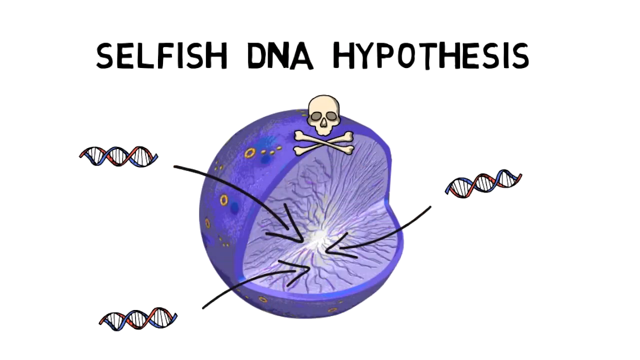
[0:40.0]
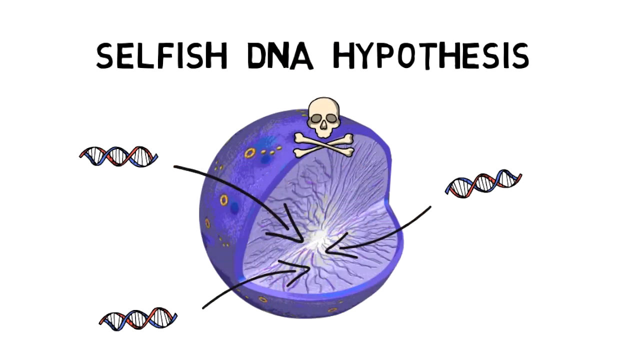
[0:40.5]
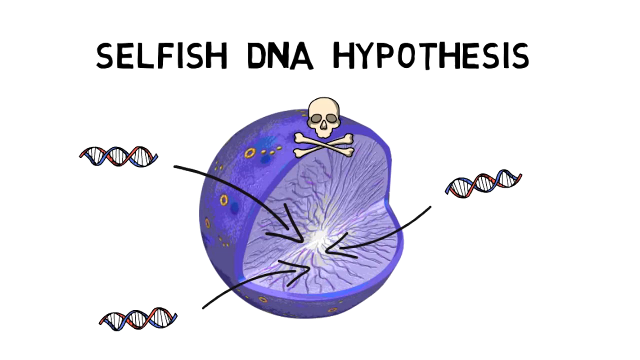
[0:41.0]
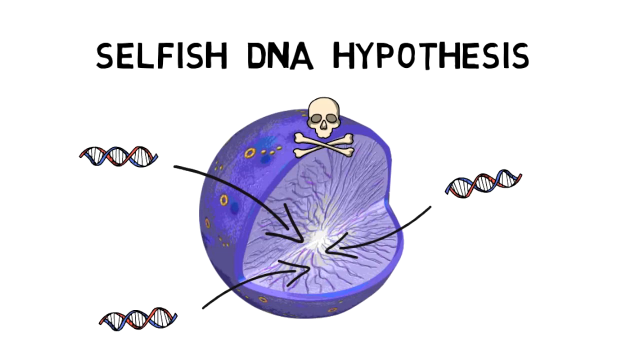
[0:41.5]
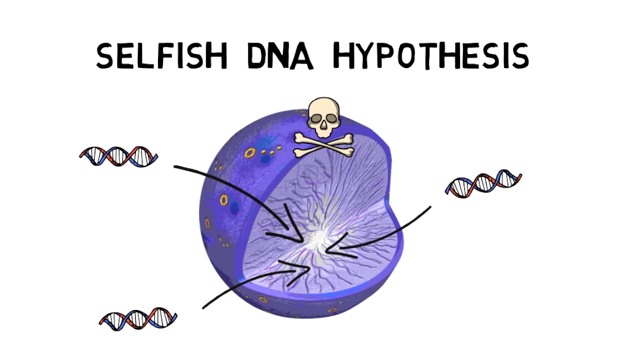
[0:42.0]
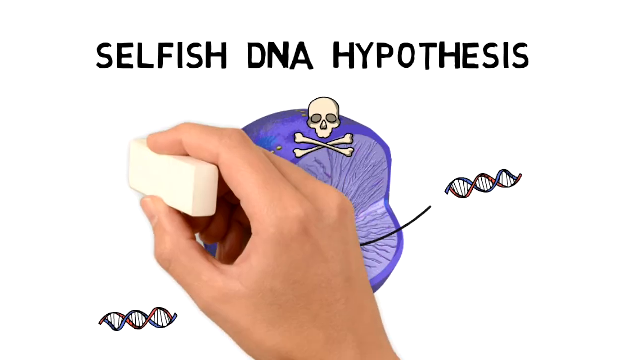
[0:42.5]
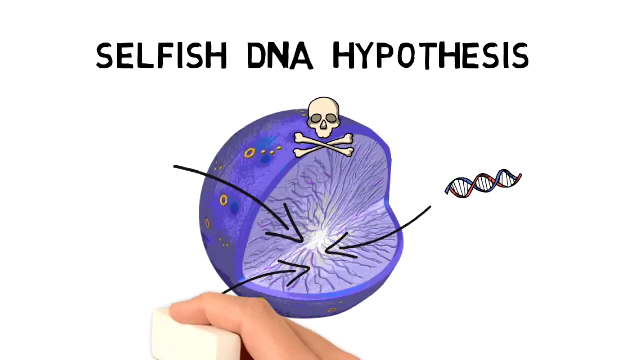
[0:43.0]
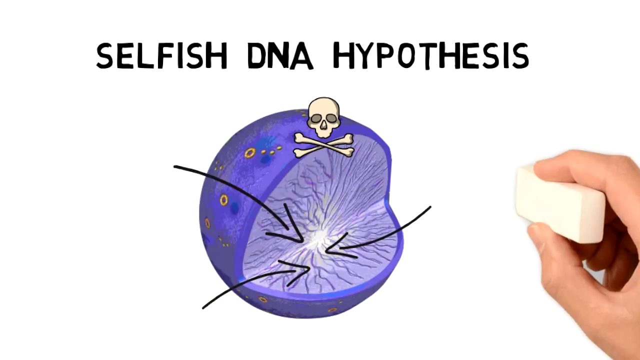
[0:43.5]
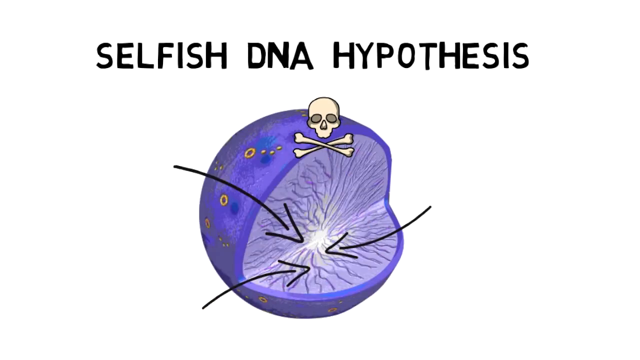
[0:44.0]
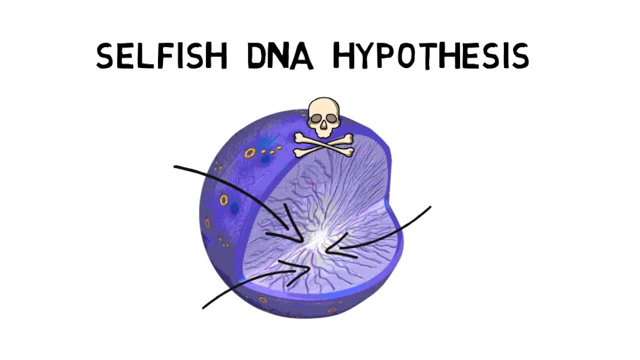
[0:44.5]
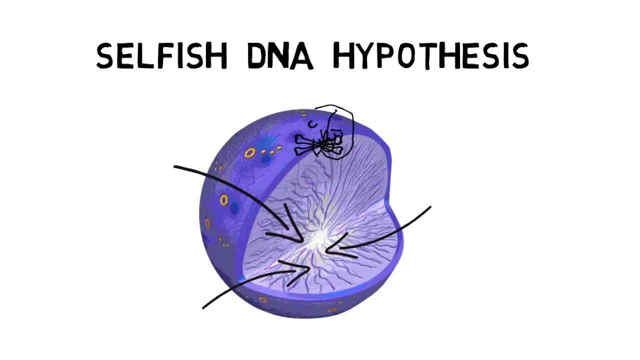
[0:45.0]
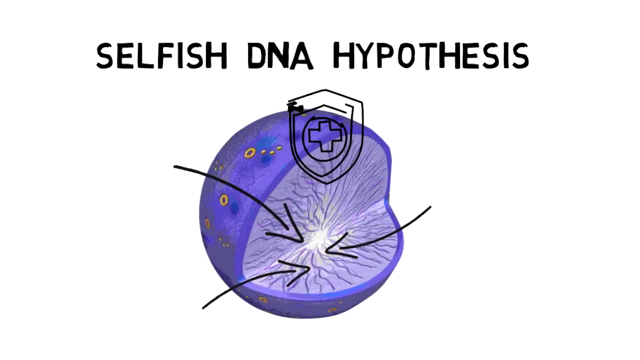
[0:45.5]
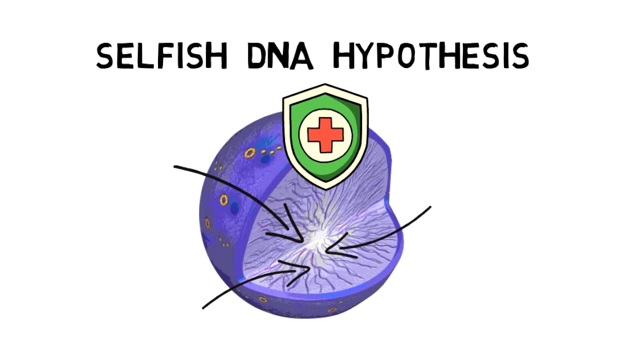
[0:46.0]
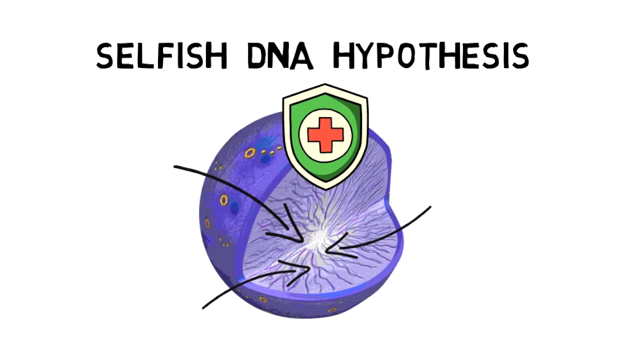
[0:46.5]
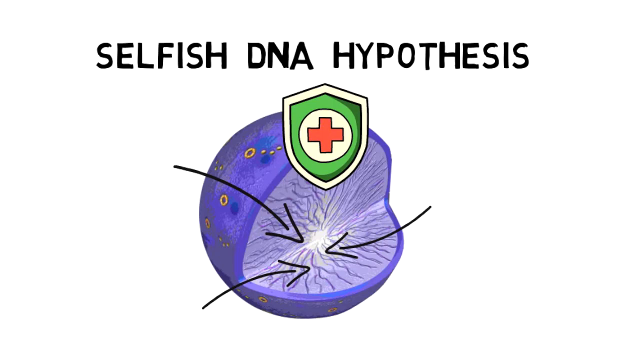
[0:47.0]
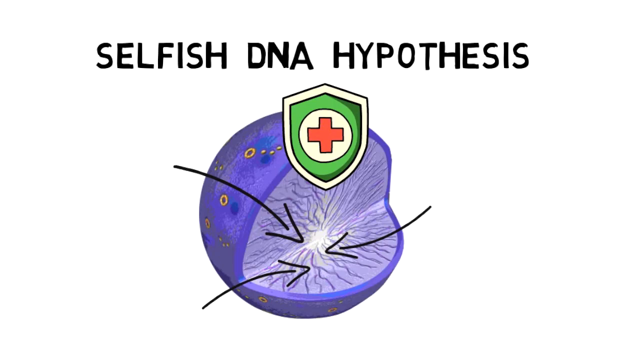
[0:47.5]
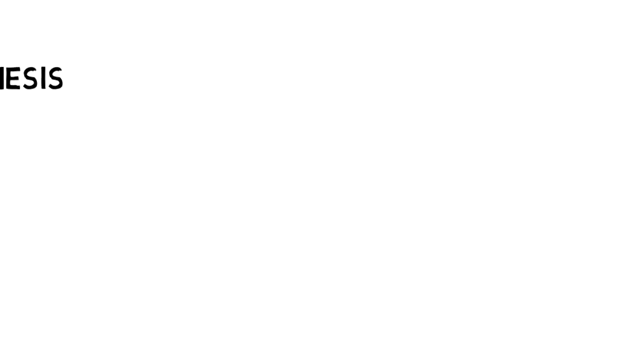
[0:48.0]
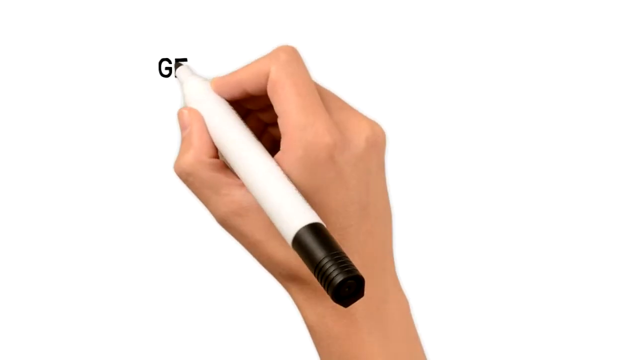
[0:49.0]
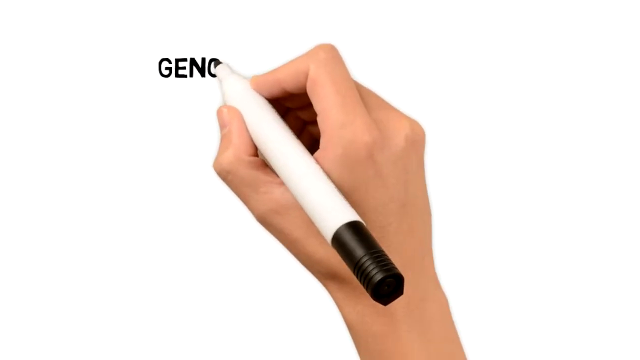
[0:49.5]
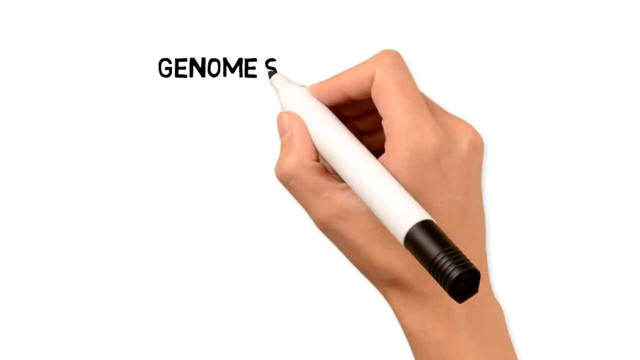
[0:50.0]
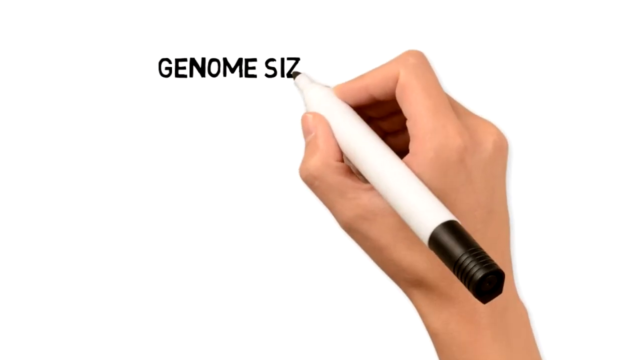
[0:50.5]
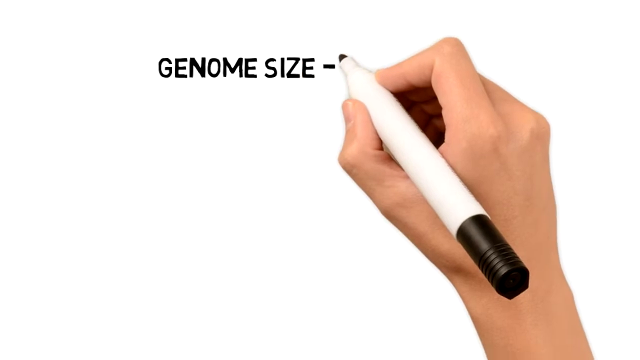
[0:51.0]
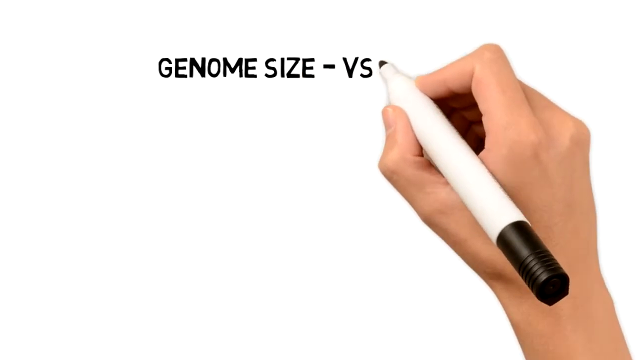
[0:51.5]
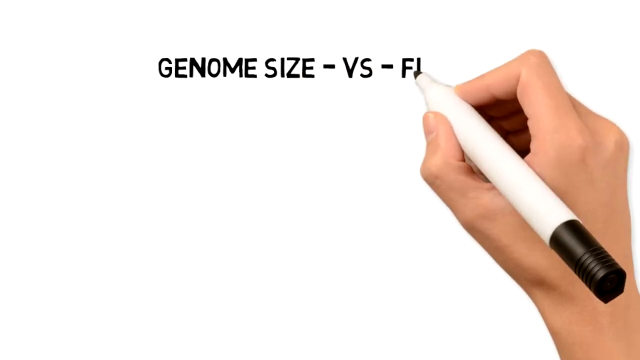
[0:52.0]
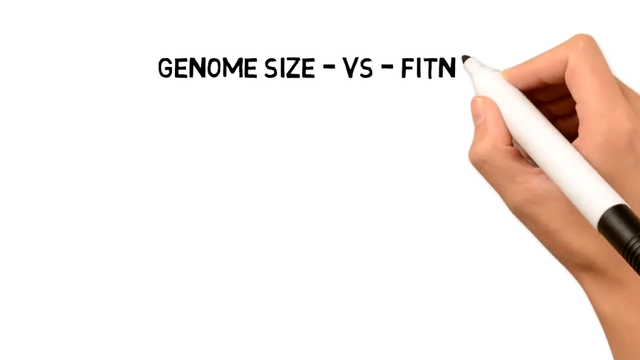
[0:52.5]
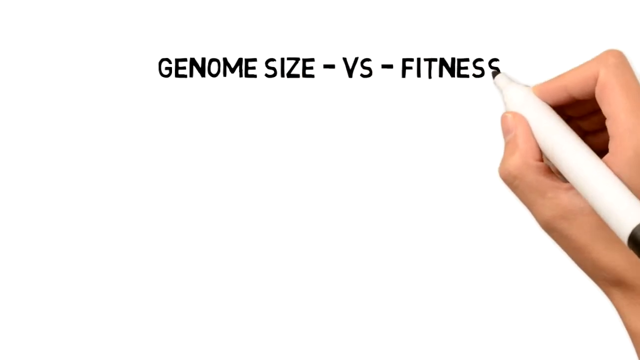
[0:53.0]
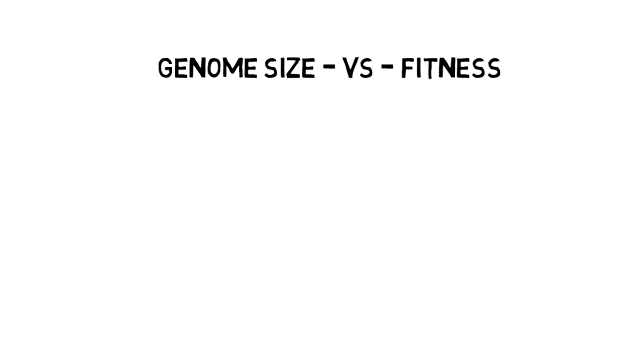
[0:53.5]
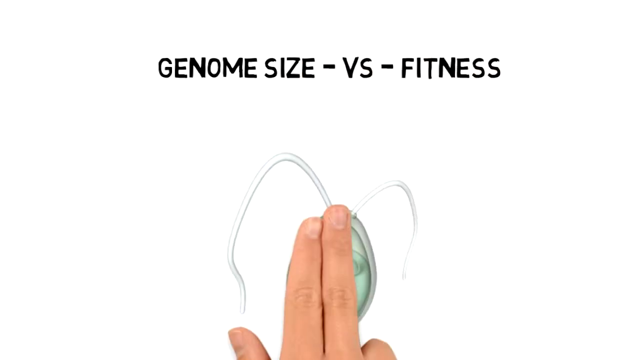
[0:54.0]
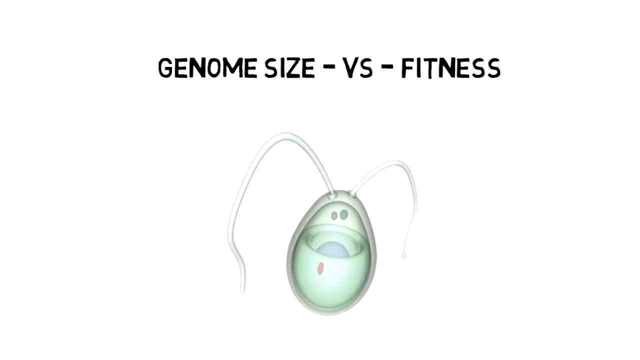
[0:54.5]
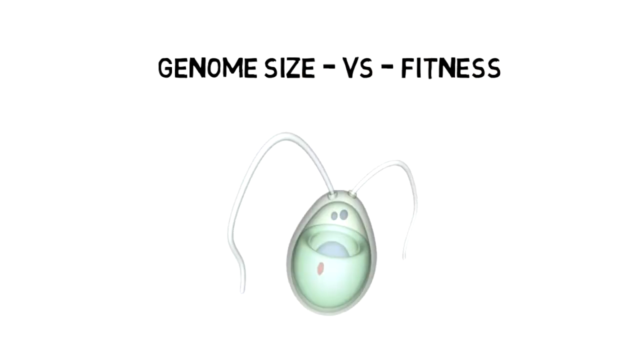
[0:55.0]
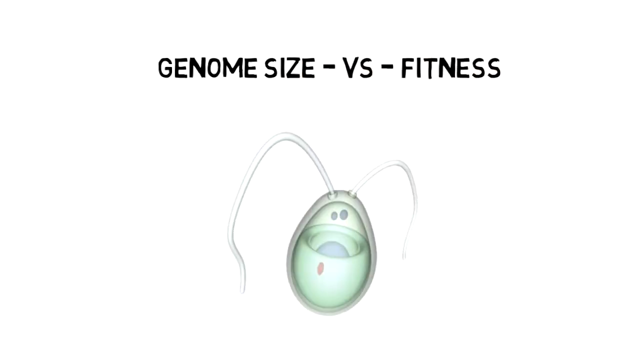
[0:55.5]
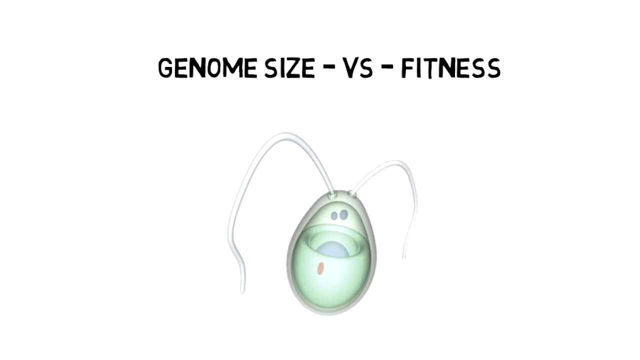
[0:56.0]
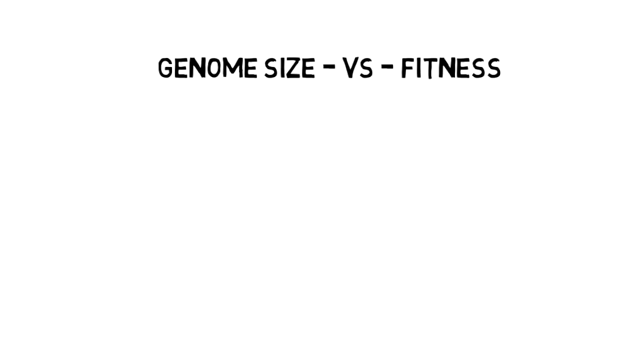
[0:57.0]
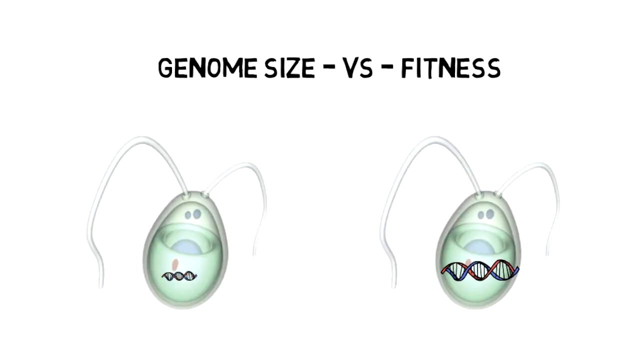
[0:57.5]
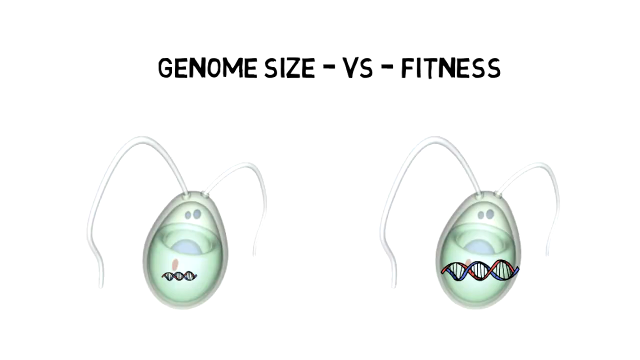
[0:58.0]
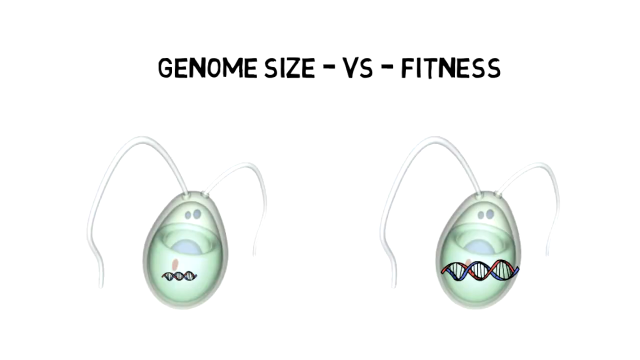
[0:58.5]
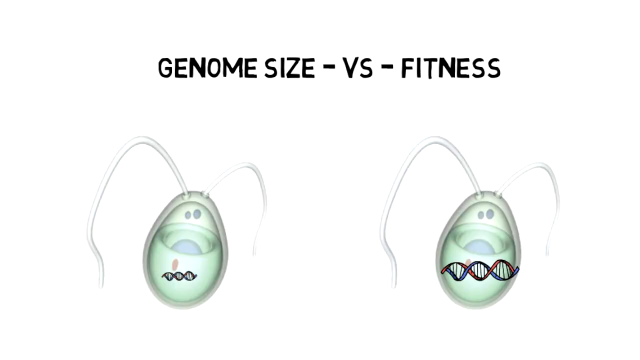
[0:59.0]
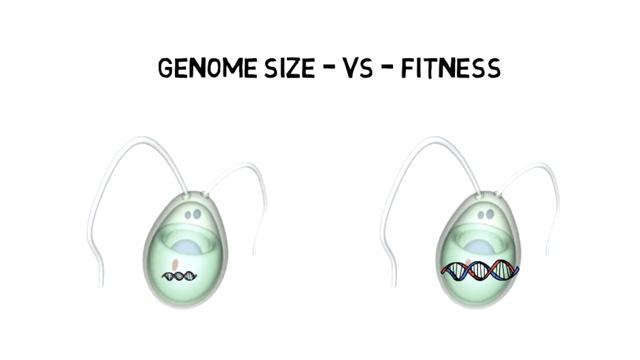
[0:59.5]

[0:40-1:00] On a white screen, black letters at the top read "selfish DNA hypothesis". A cell that looks like a sphere cut open is on the screen, purple on the outside and light purple on the inside, with DNA strands around it and arrows drawn to its center. A skull and crossbones is on top of the cell. A right hand comes in with an eraser and erases the DNA strands, and a shield appears above the cell. The view switches to a white screen where a person holding a white marker in the right hand writes "genome size - BS - fitness". A hand then slides something green that looks like a little cell or a little bug up onto the screen. Then two of these are shown, one with a large DNA strand through it and one with a small DNA strand through it.